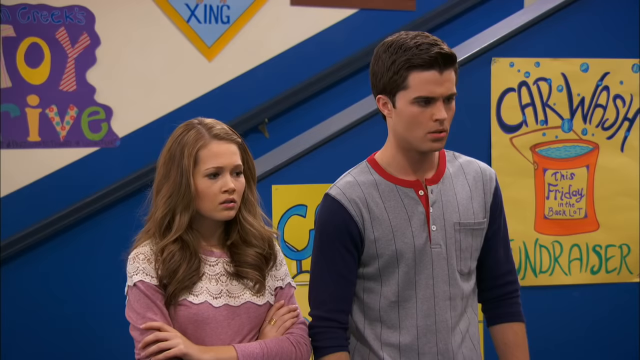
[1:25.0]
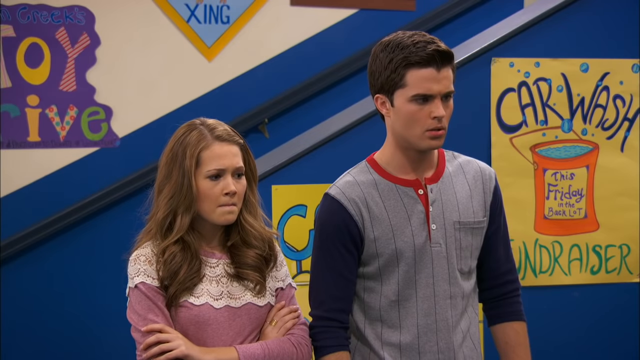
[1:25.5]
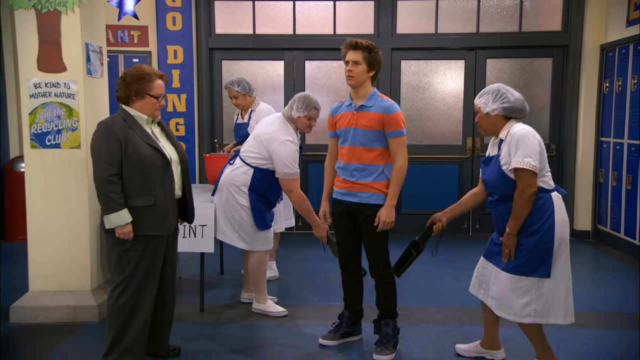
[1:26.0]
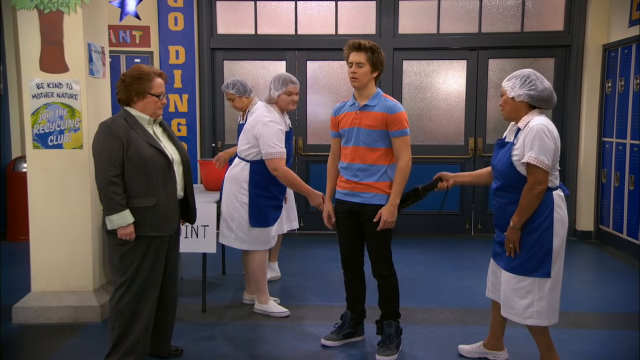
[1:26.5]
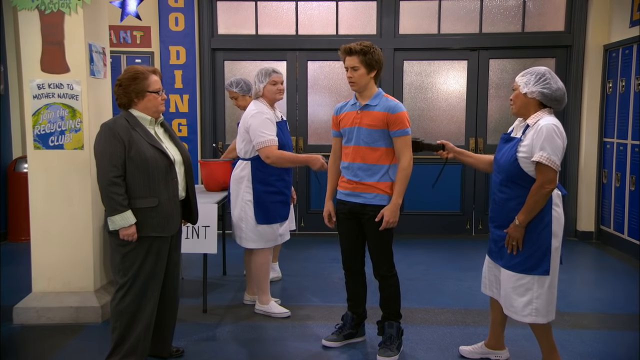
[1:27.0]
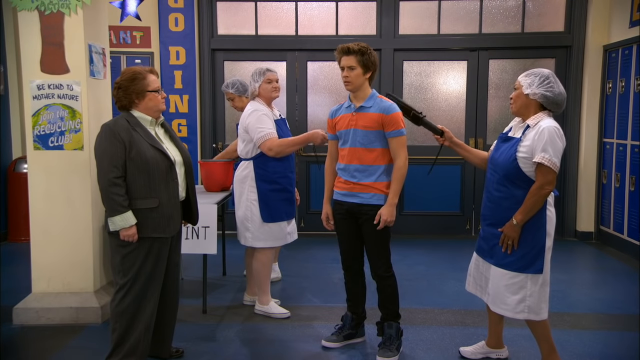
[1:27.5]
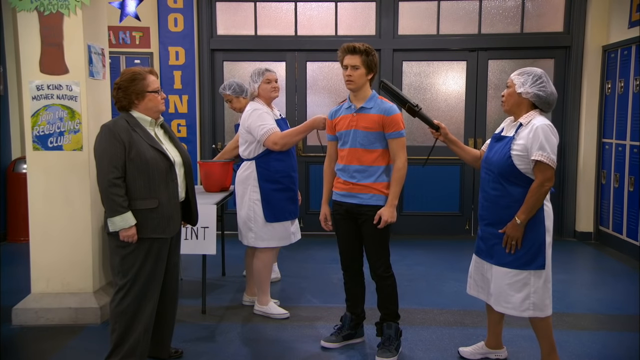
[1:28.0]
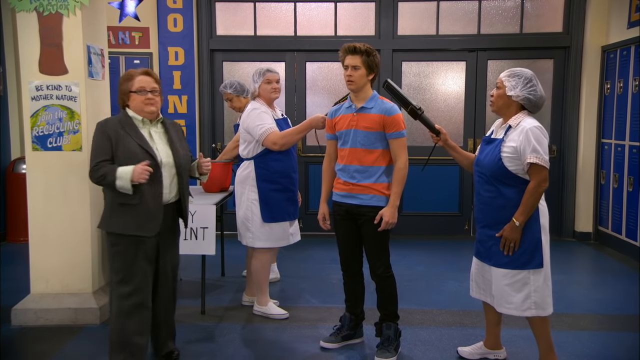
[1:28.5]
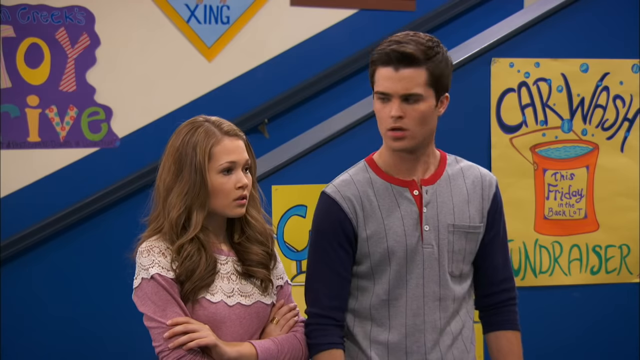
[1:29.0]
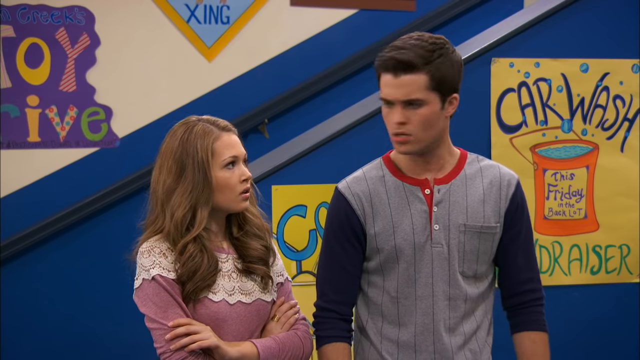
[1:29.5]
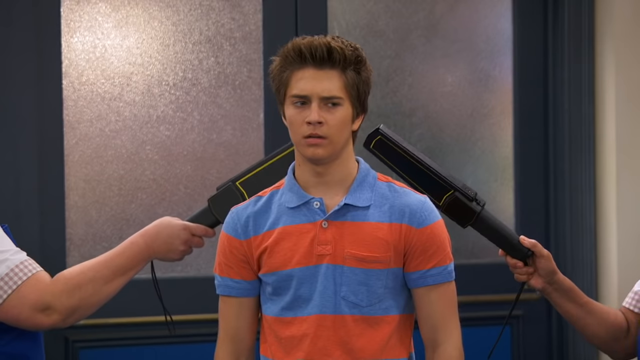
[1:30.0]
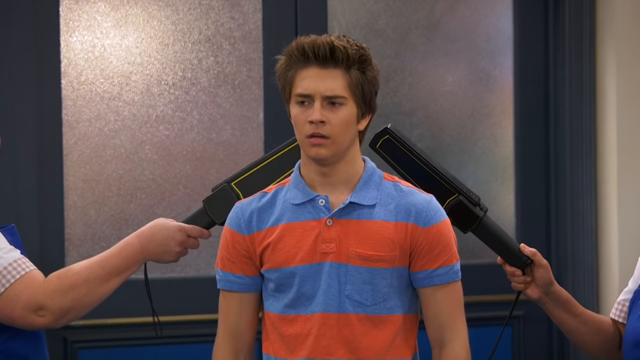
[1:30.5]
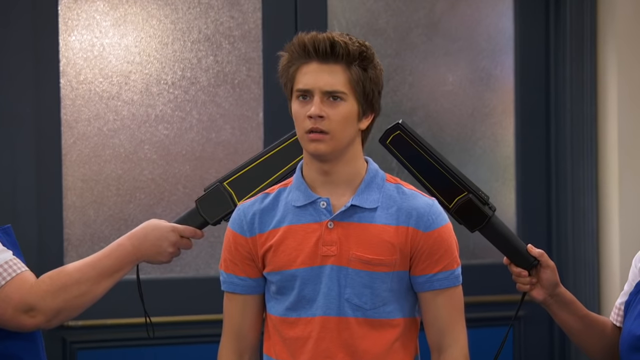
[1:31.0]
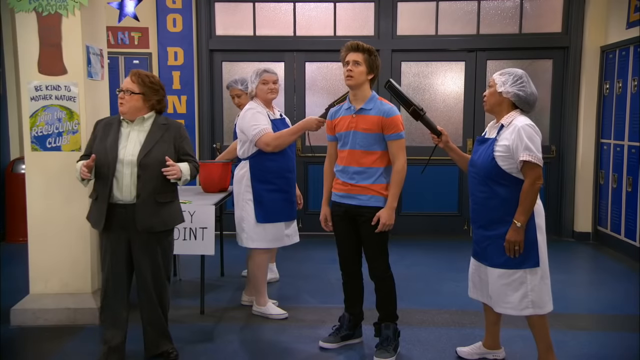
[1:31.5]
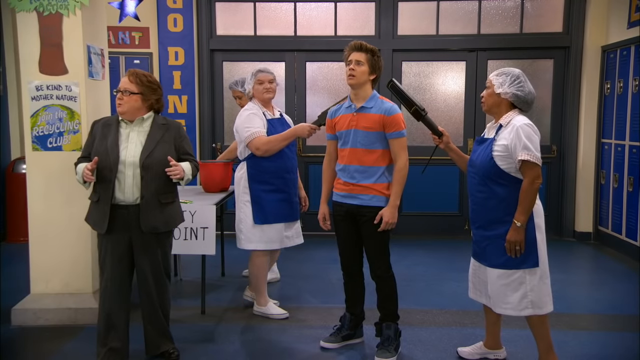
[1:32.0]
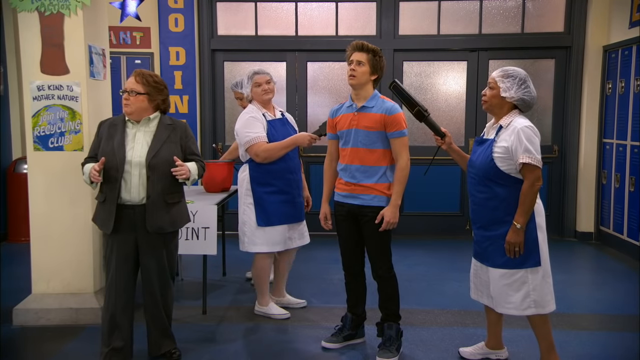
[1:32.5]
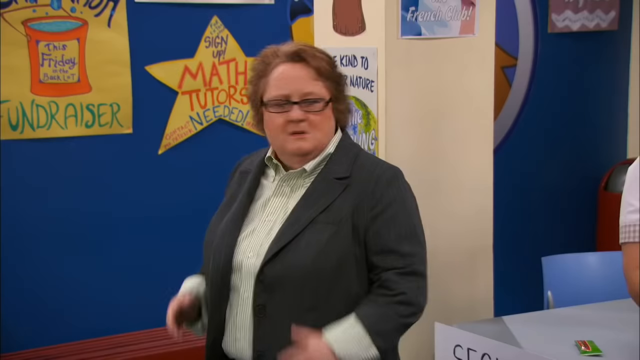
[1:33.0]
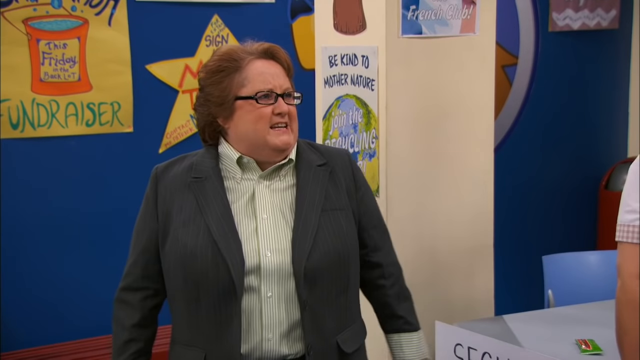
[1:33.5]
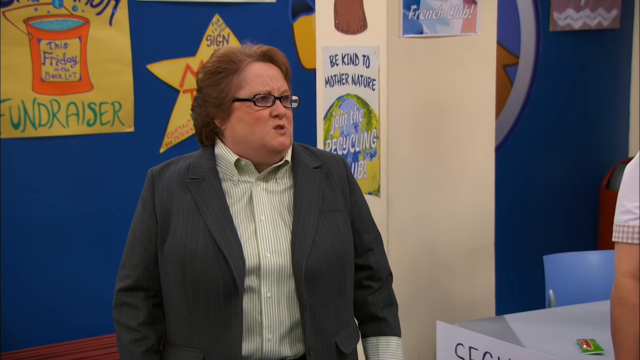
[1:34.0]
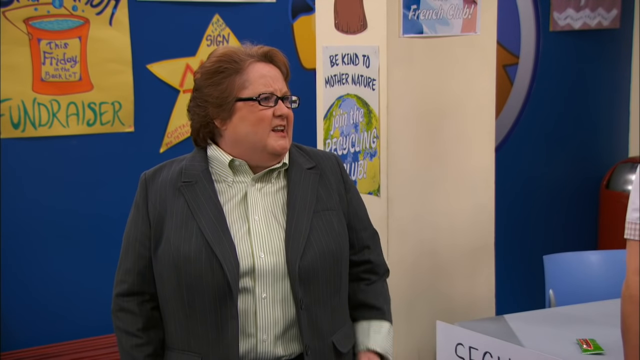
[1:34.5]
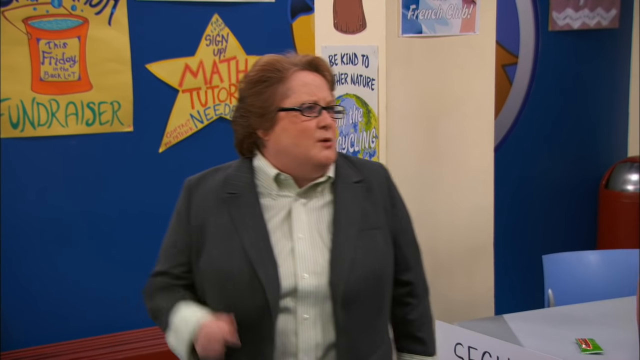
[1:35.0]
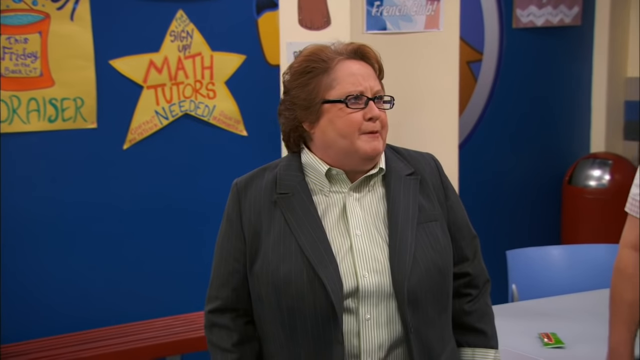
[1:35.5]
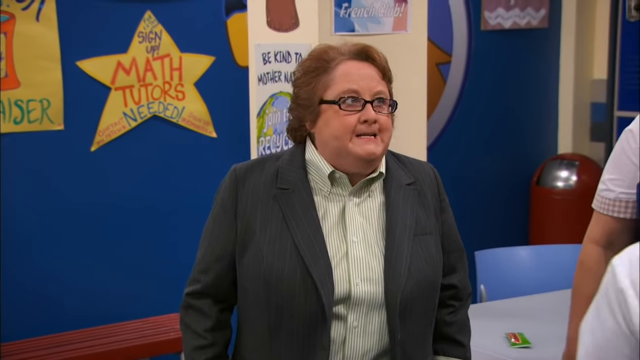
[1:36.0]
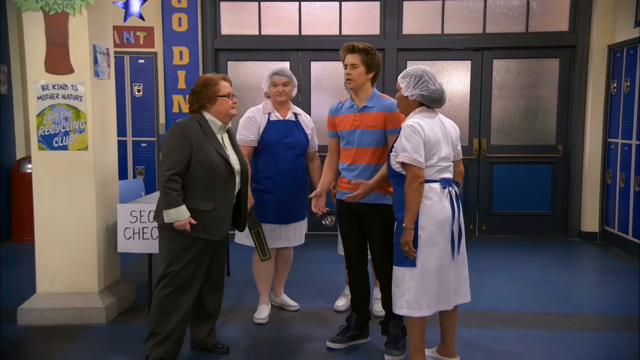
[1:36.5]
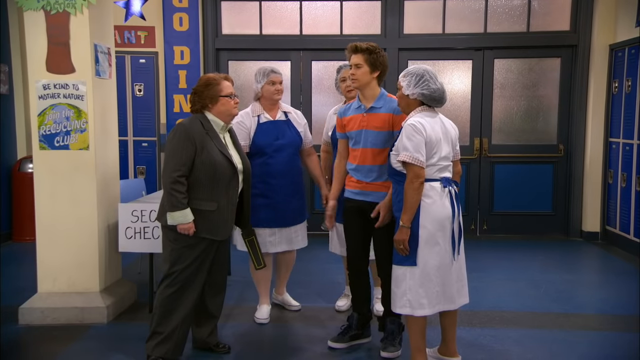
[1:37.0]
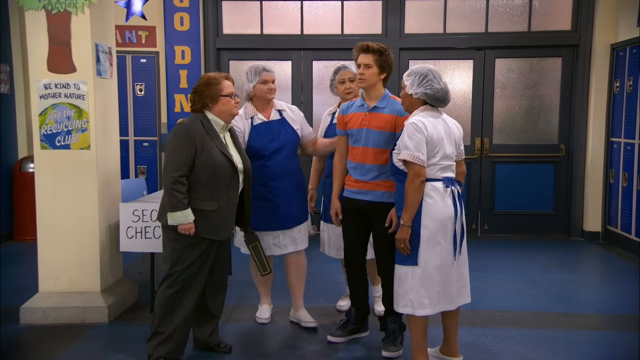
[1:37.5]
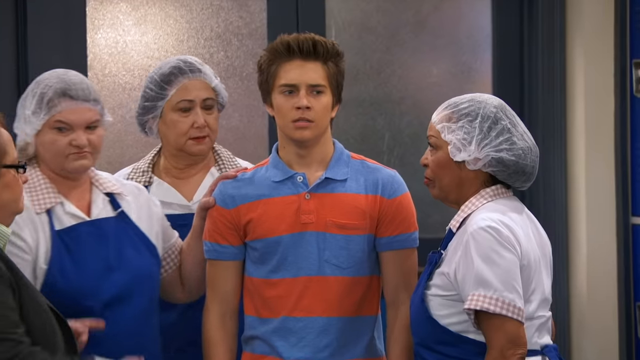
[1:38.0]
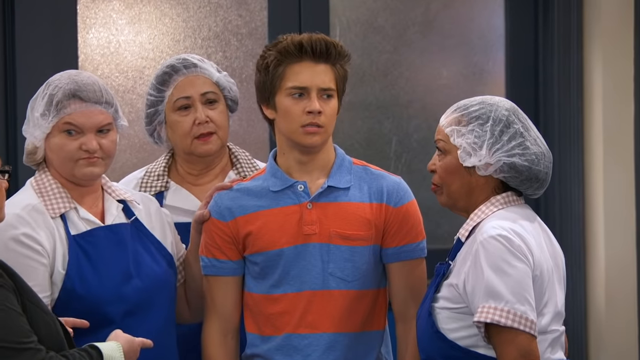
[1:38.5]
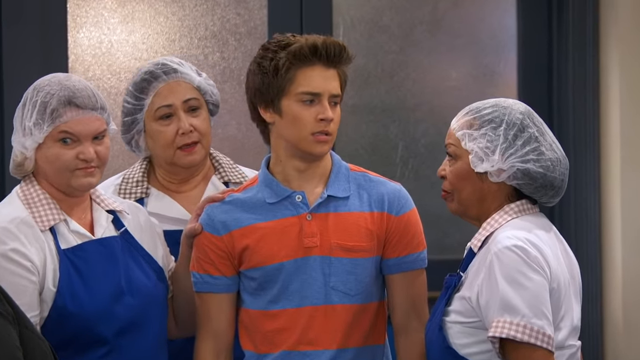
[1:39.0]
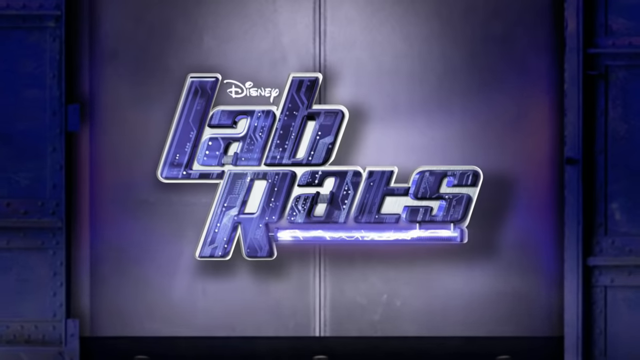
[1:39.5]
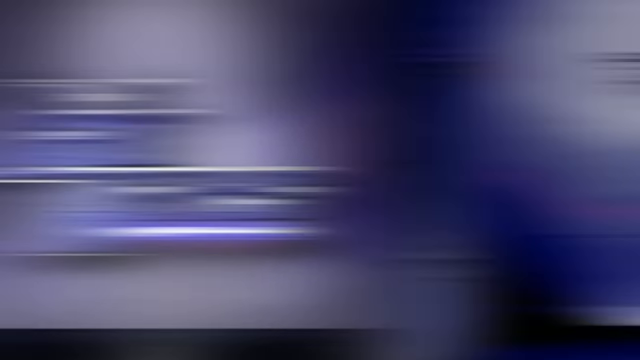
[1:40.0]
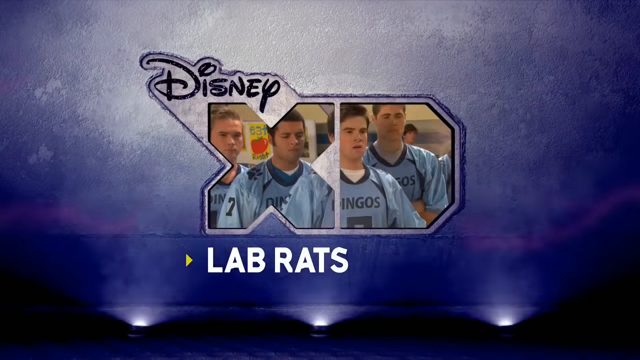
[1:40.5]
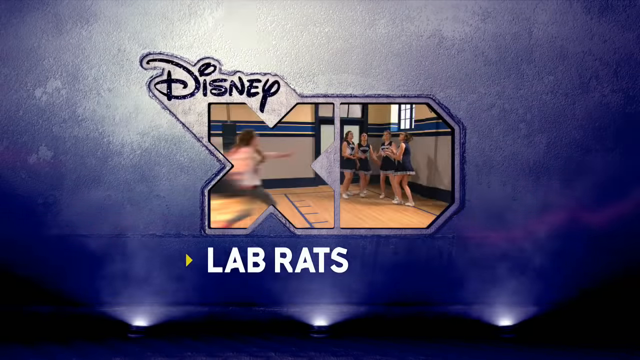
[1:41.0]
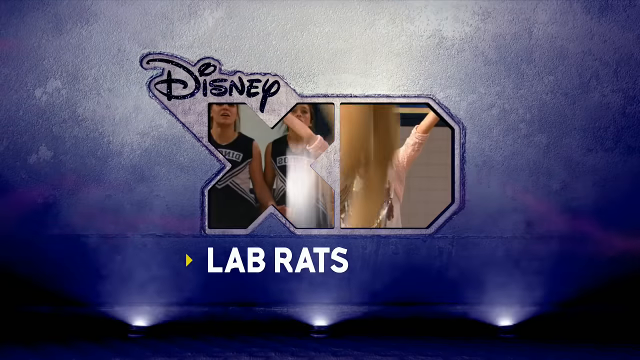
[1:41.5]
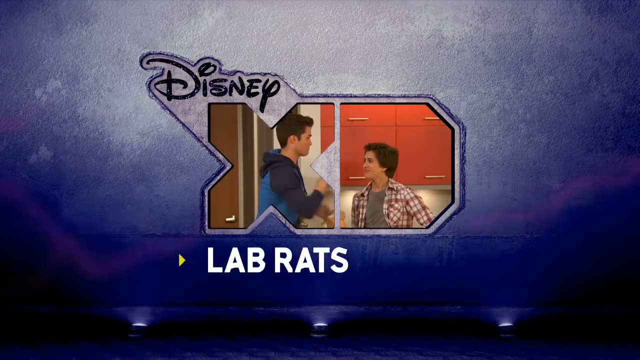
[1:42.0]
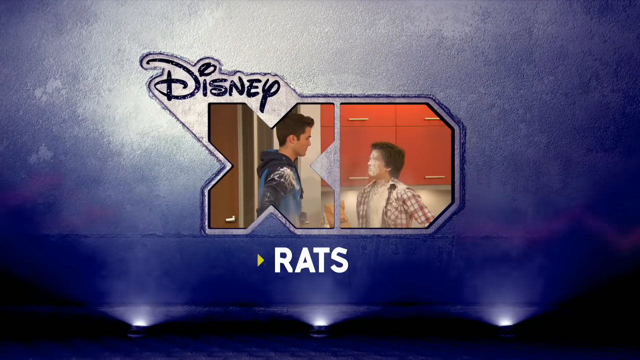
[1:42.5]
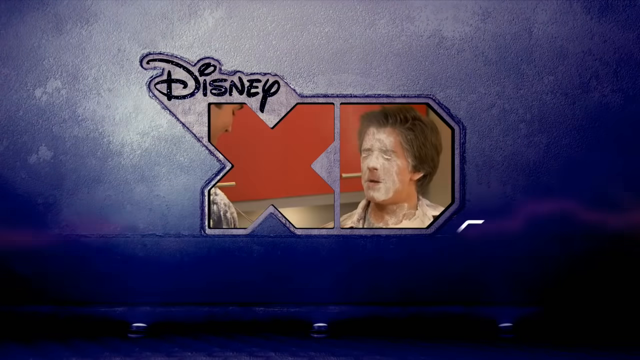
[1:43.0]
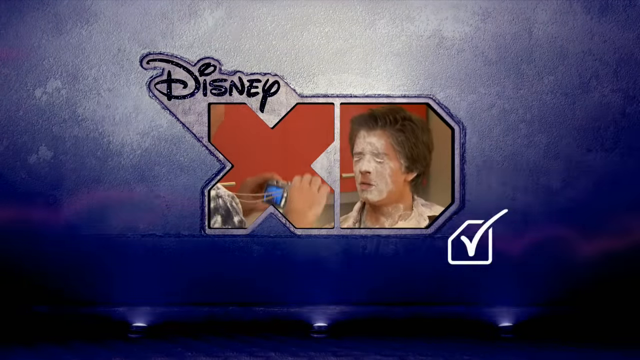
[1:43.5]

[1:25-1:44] The boy in orange and blue stands between two ladies who use security wands to wand him up and down. Both ladies are dressed in the same type of outfit: a white dress, white shoes and hairnets, and they both have the wands on either side of them. Another lady dressed exactly the same stands behind them. After they finish wanding him, the scene changes to the teacher in the glasses talking, looking agitated, and then all three ladies using the security wands look at the man. The scene then changes to the Disney logo, with text that says "Disney Lab Rats," followed by another logo with different clips.